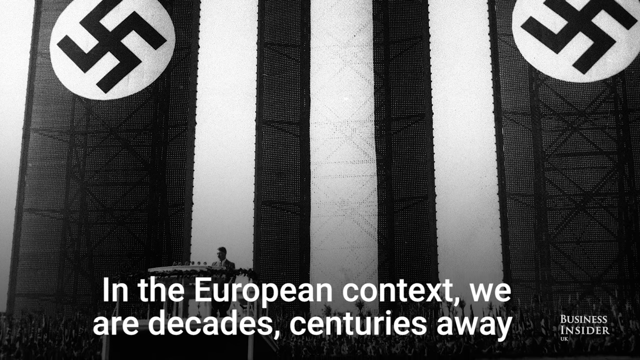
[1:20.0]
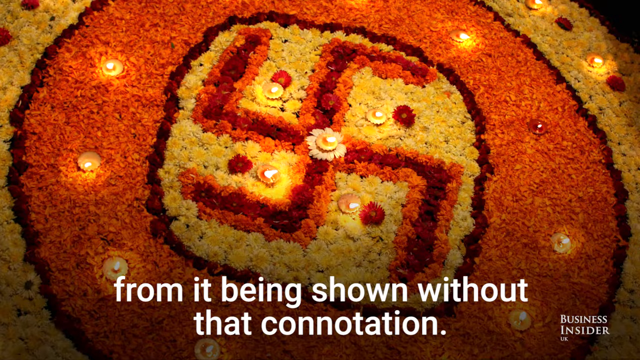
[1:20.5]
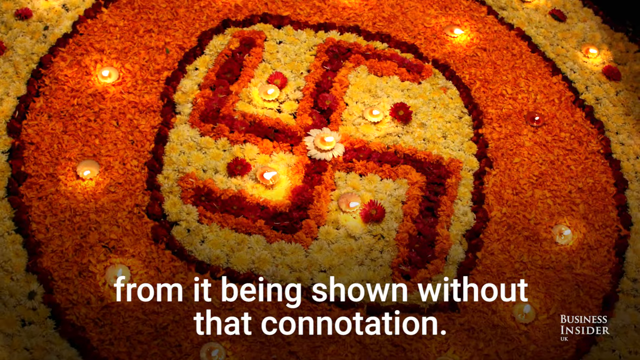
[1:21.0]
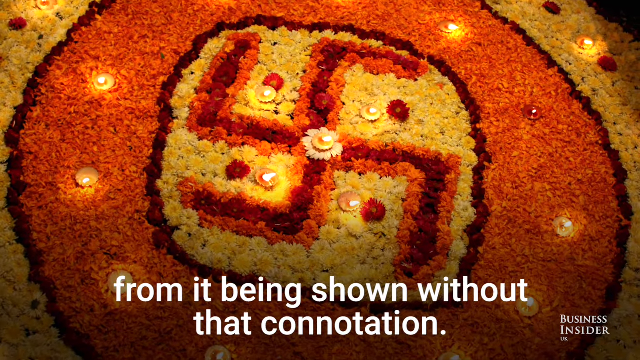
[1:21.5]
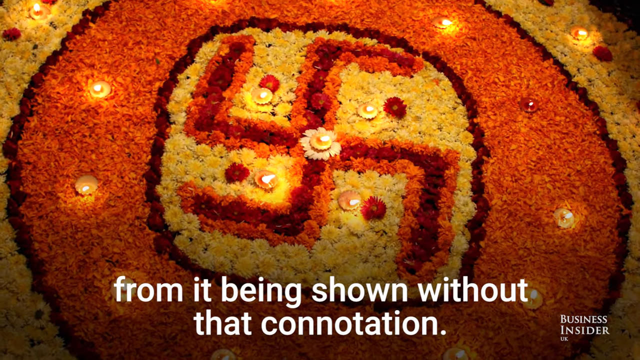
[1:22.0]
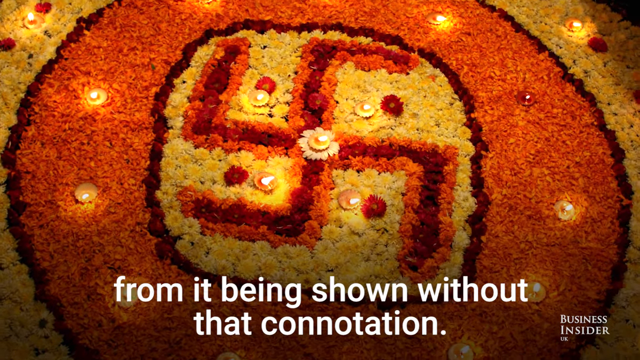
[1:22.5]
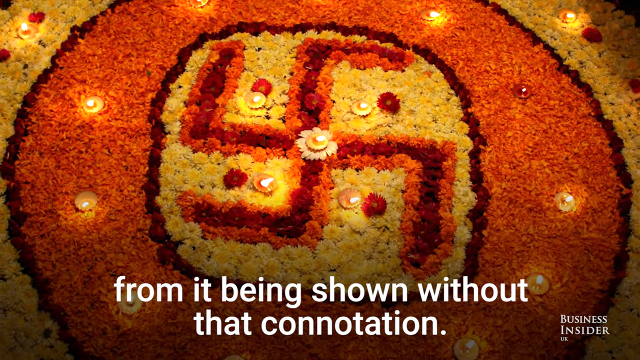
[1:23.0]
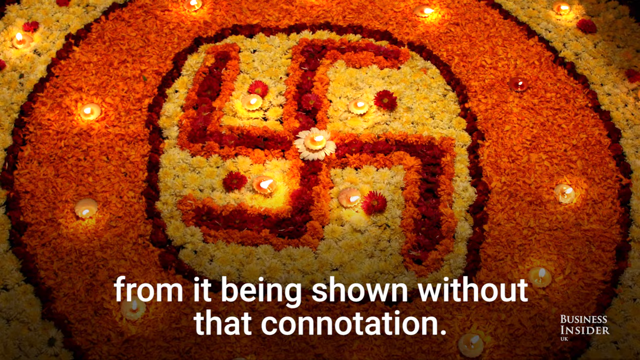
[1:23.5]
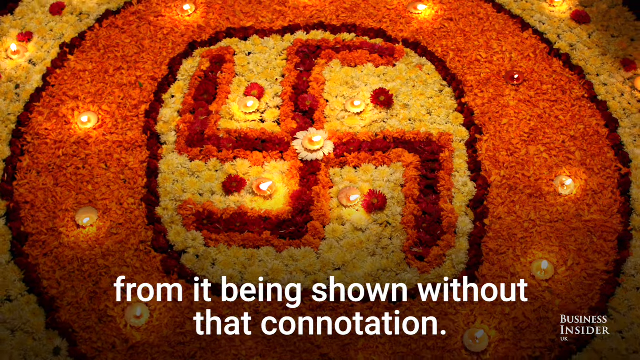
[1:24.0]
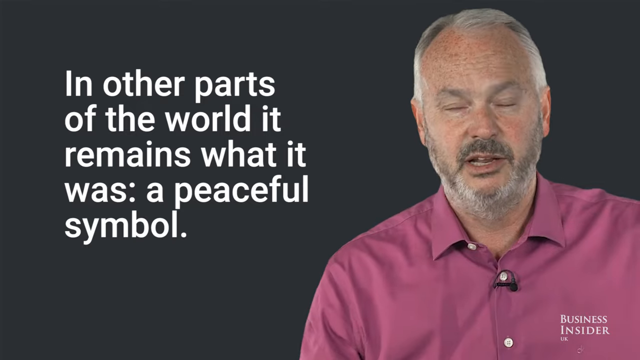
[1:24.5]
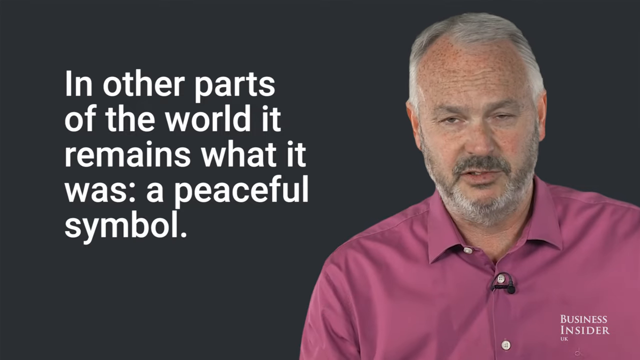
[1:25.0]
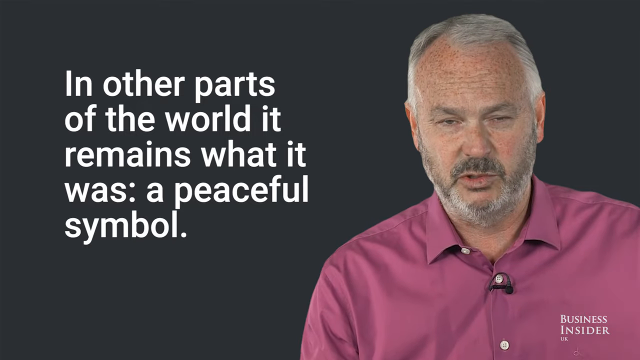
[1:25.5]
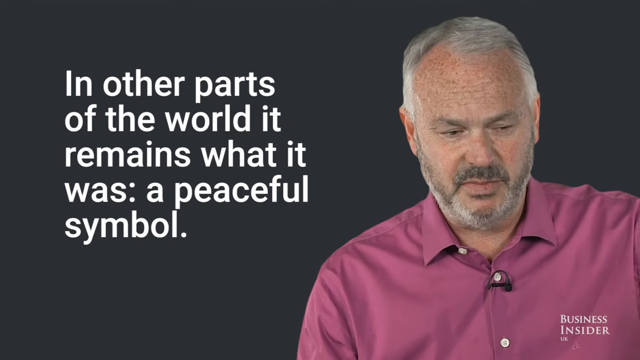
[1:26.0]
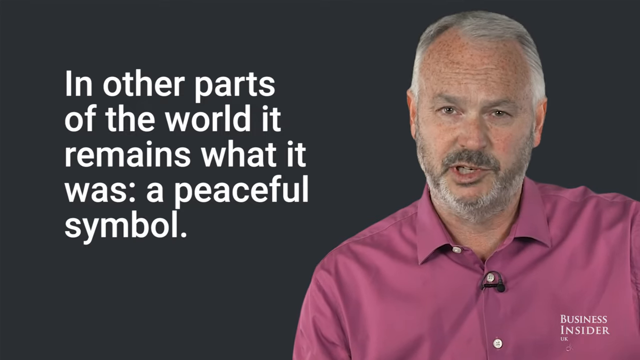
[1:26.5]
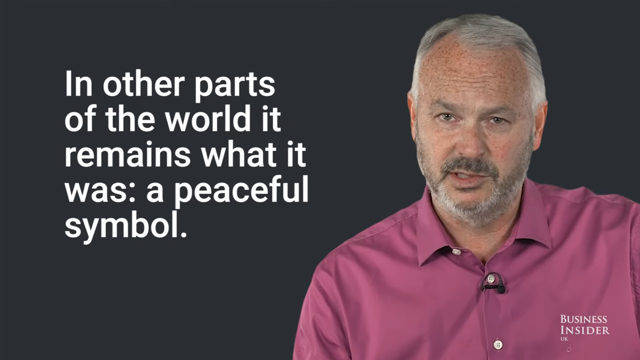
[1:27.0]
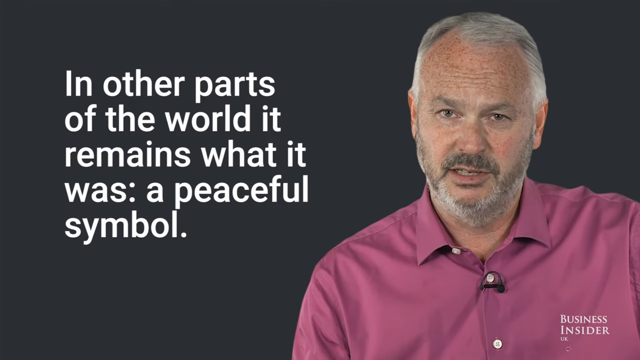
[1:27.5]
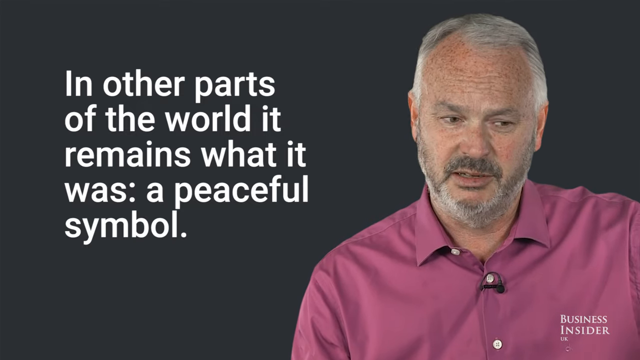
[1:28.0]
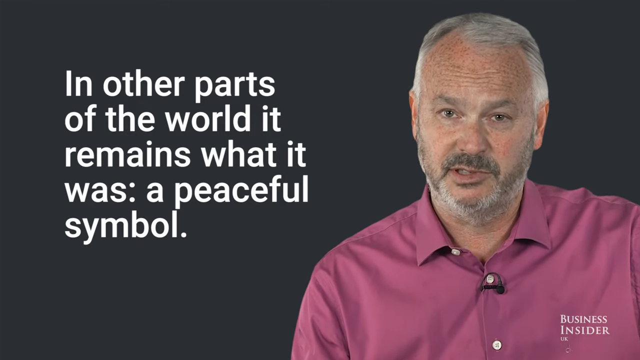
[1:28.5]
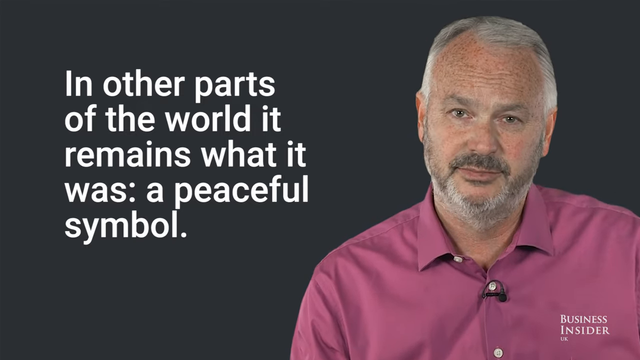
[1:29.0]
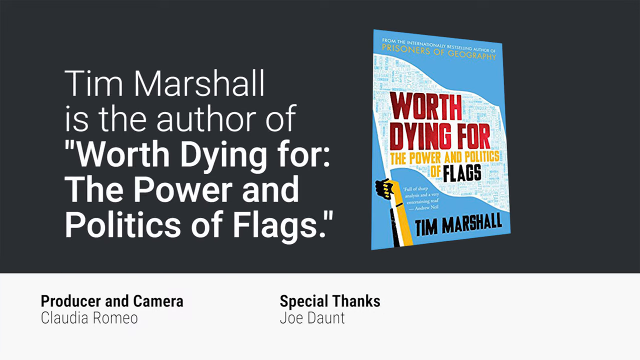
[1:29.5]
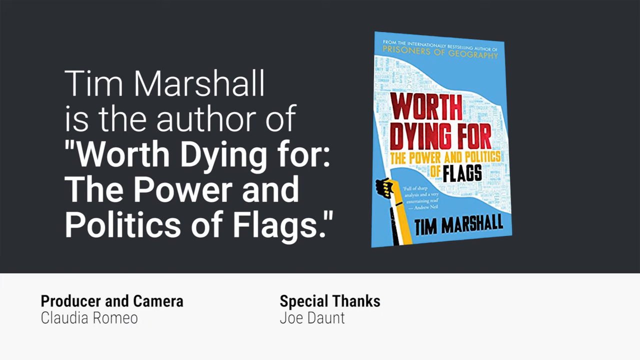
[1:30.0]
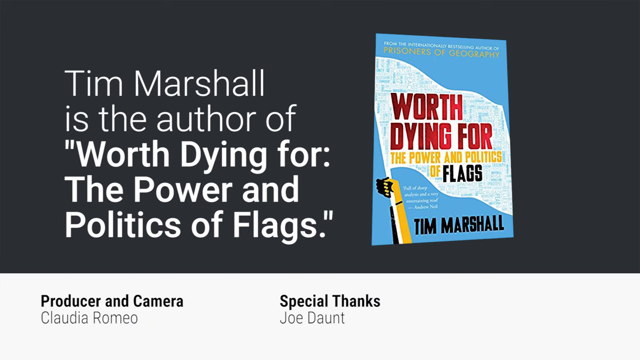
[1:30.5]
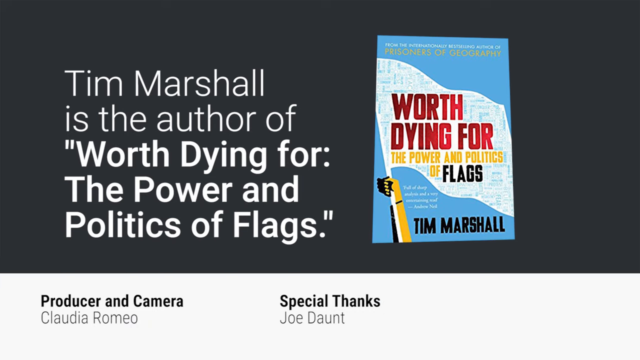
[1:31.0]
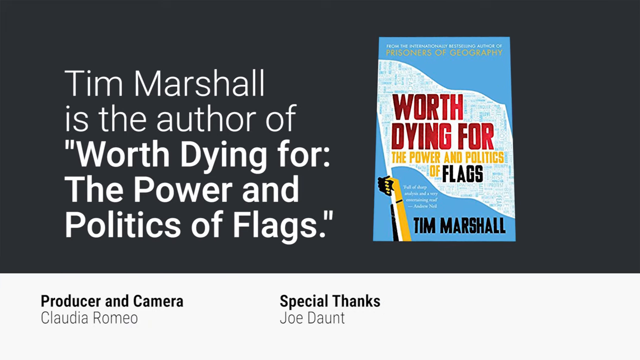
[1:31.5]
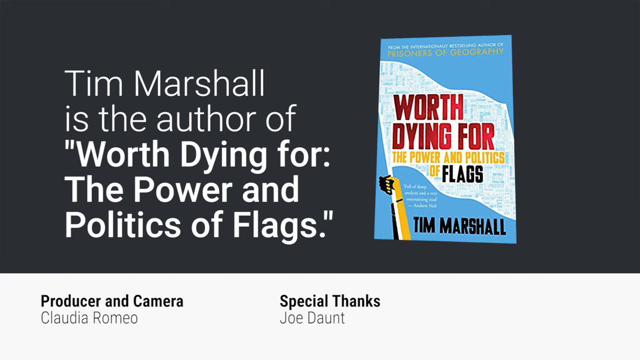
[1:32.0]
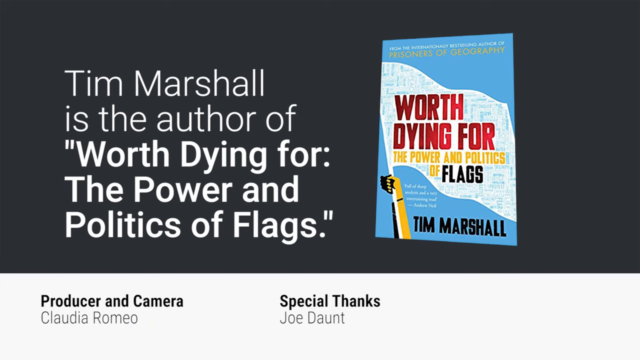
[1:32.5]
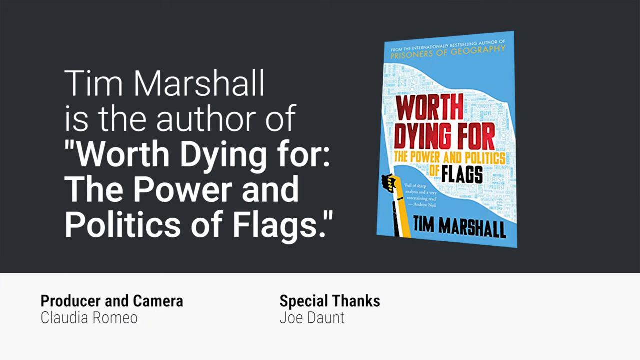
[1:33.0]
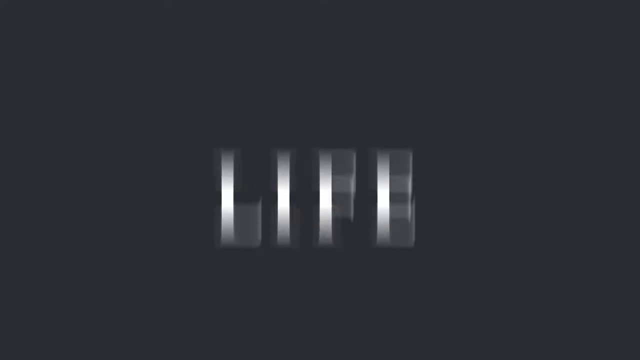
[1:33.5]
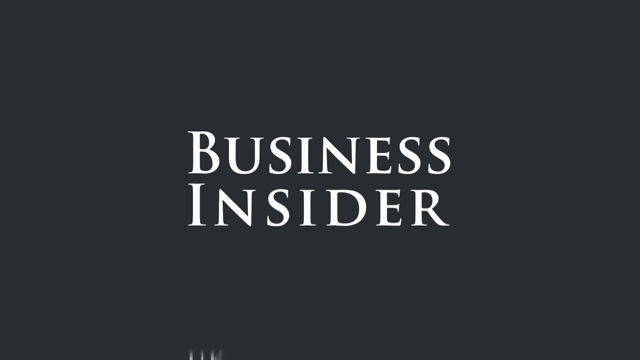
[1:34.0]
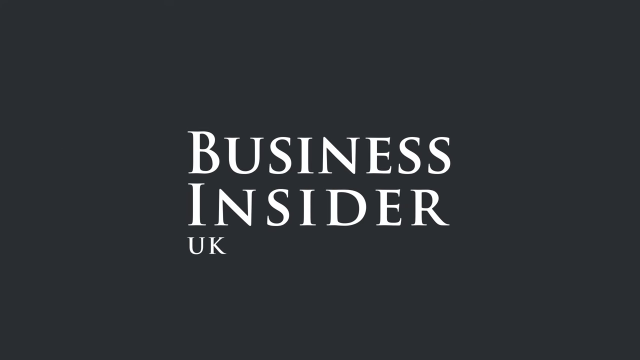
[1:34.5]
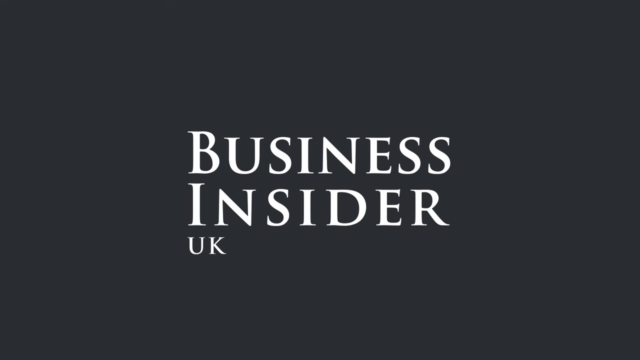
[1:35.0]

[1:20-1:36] Various images show how the swastika is portrayed in Asian countries. One photo shows a swastika built around flowers, with candle lights within that area. The book reading "worth dying for" and "the power and politics of flags" appears.